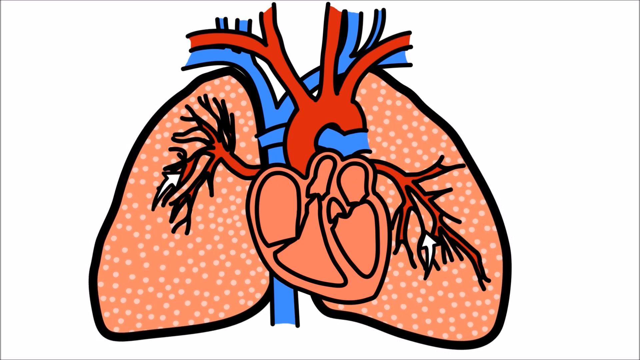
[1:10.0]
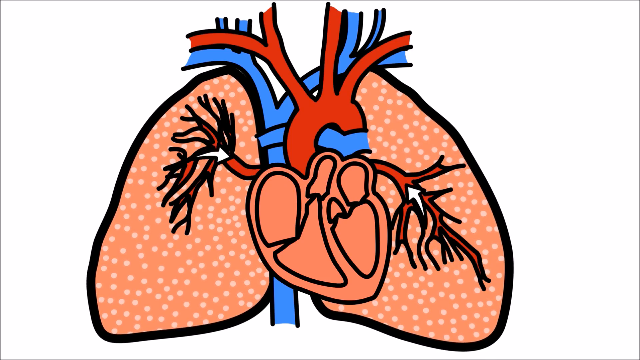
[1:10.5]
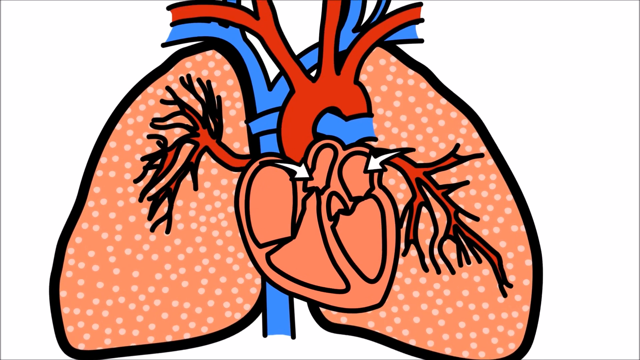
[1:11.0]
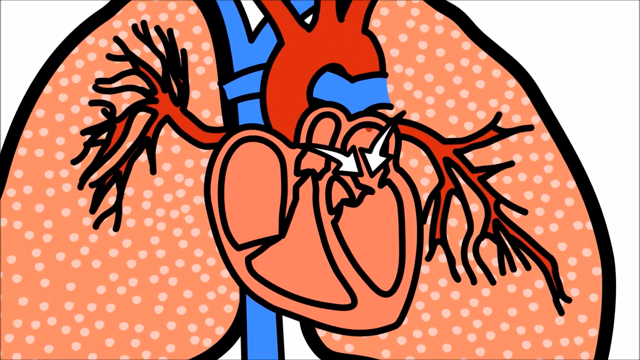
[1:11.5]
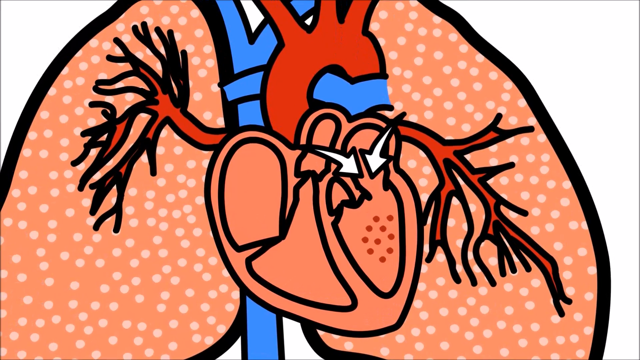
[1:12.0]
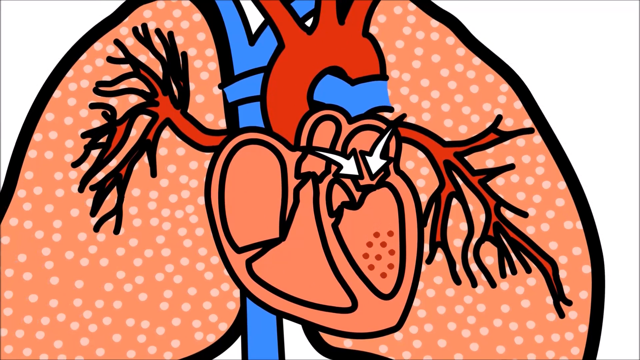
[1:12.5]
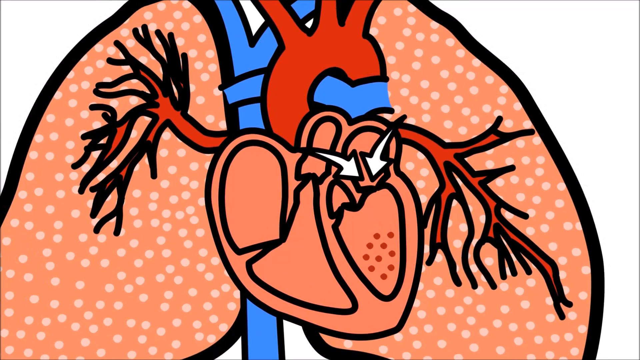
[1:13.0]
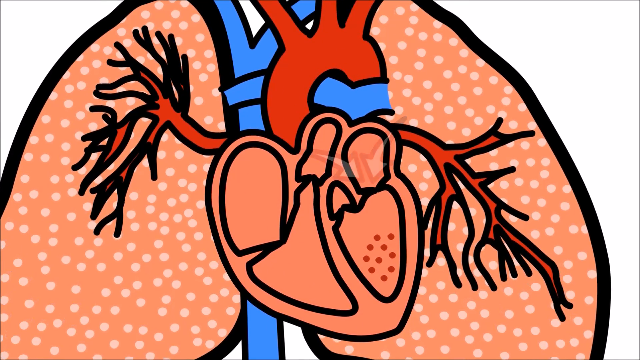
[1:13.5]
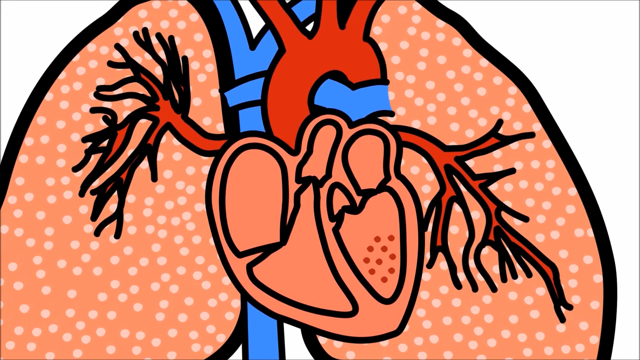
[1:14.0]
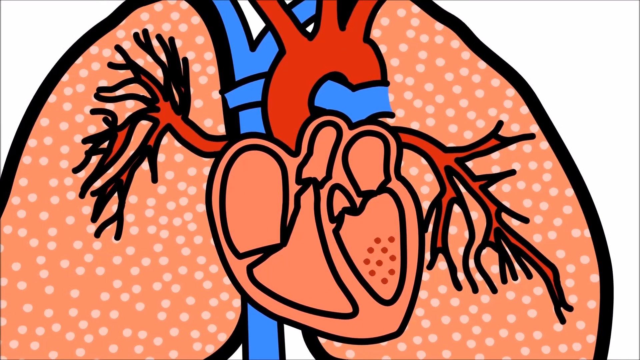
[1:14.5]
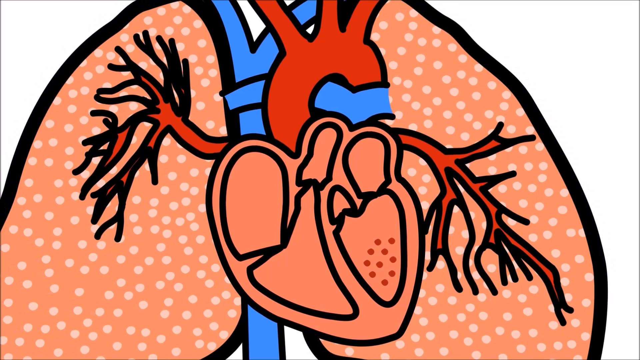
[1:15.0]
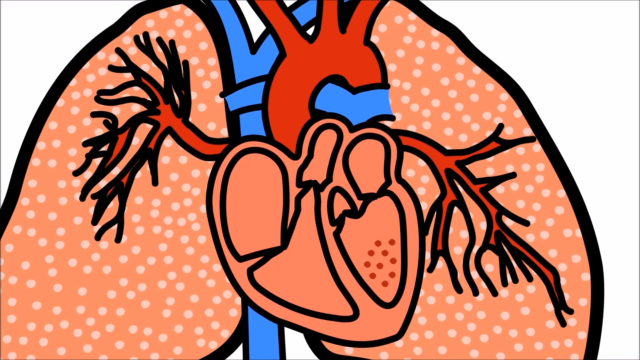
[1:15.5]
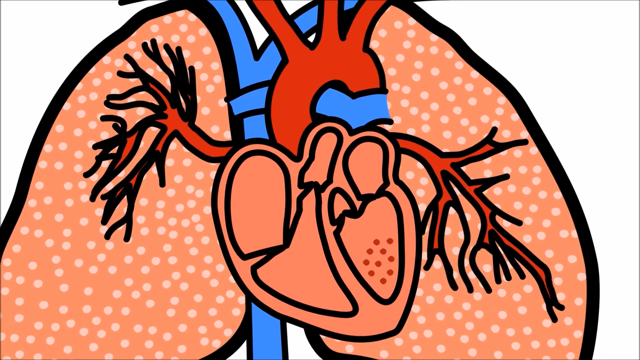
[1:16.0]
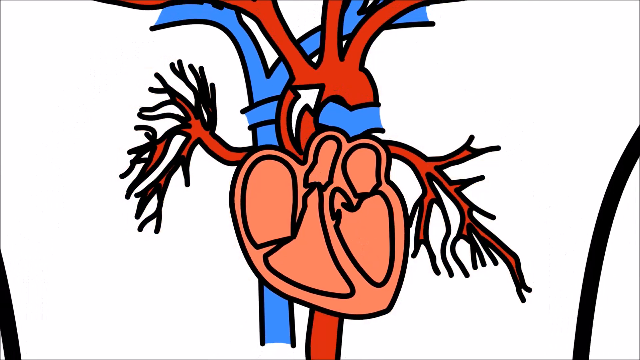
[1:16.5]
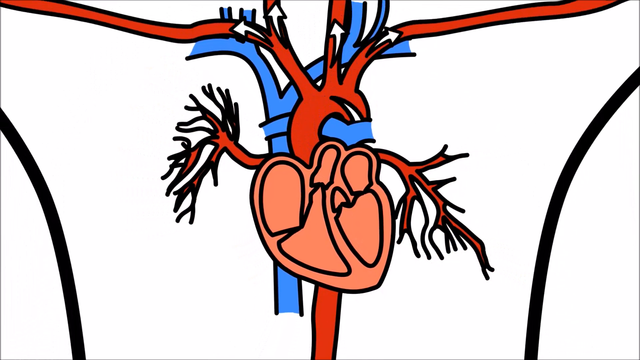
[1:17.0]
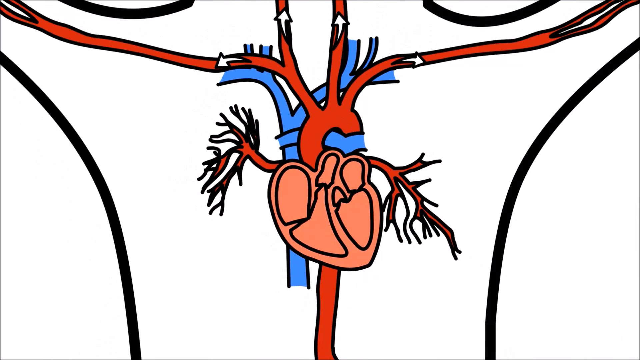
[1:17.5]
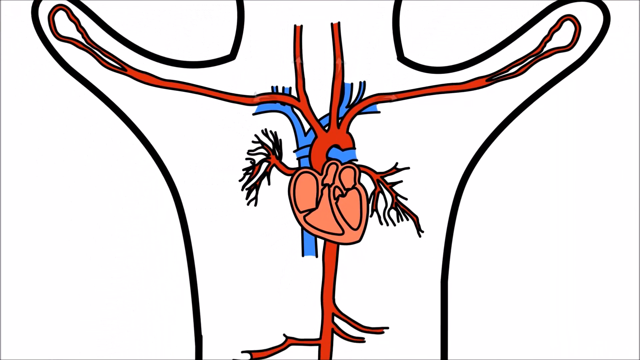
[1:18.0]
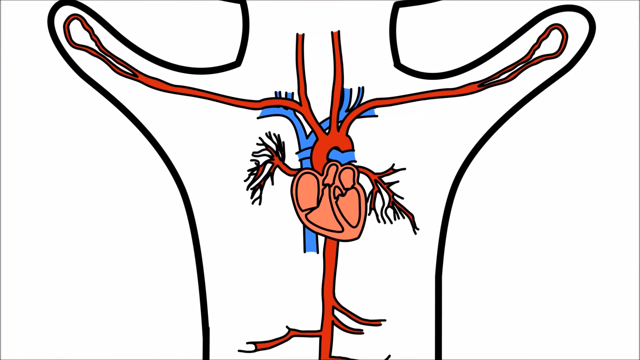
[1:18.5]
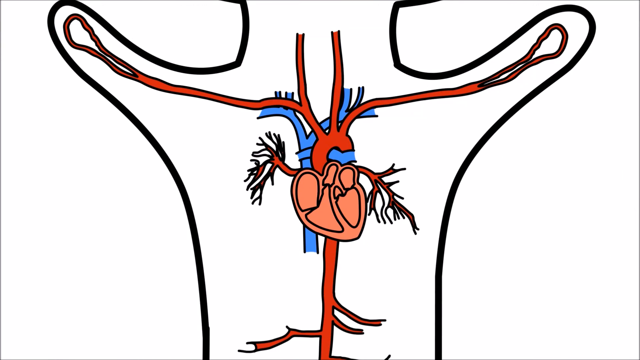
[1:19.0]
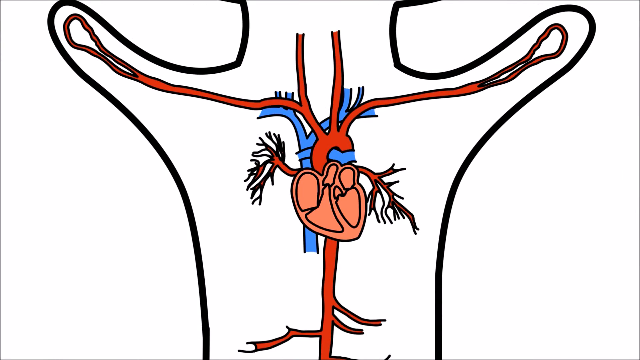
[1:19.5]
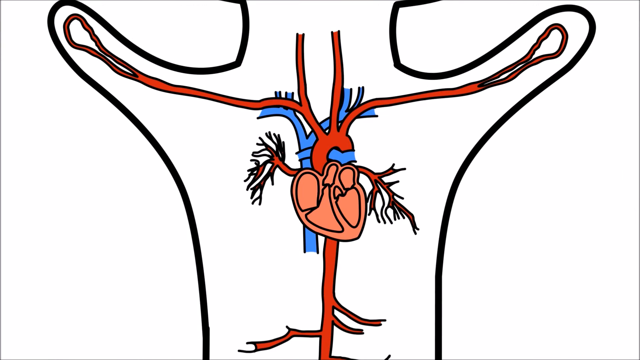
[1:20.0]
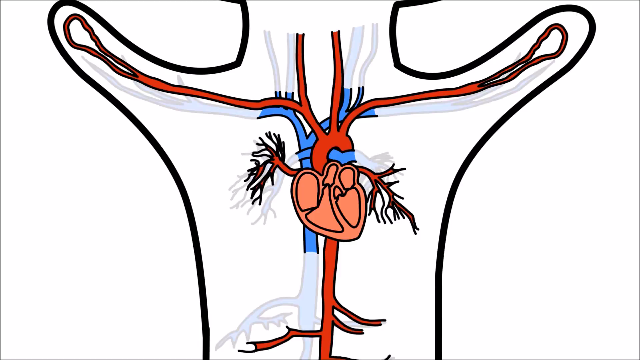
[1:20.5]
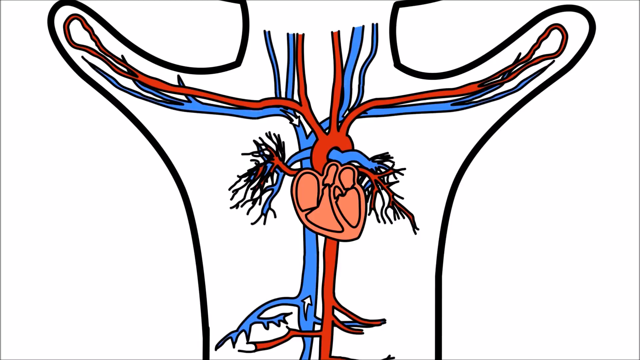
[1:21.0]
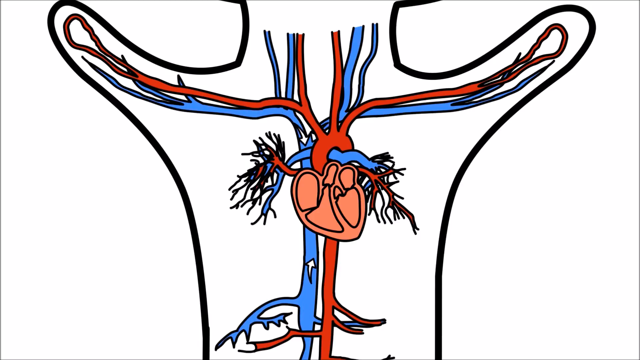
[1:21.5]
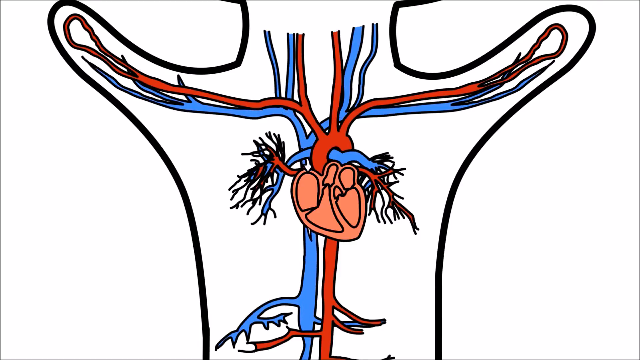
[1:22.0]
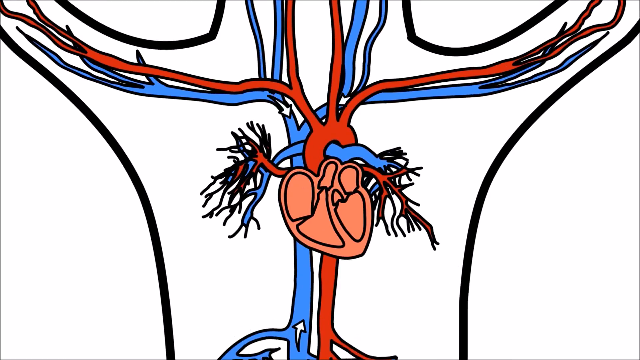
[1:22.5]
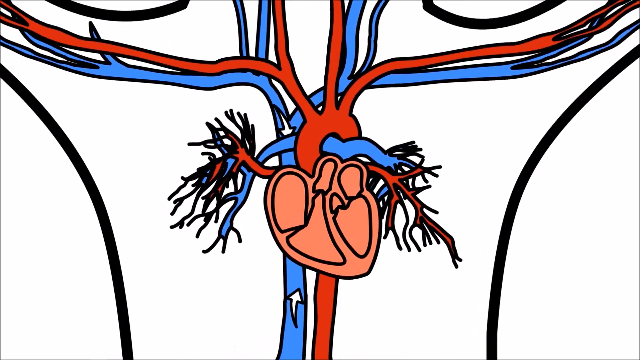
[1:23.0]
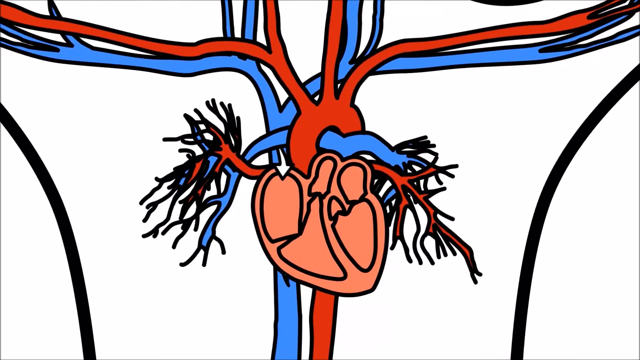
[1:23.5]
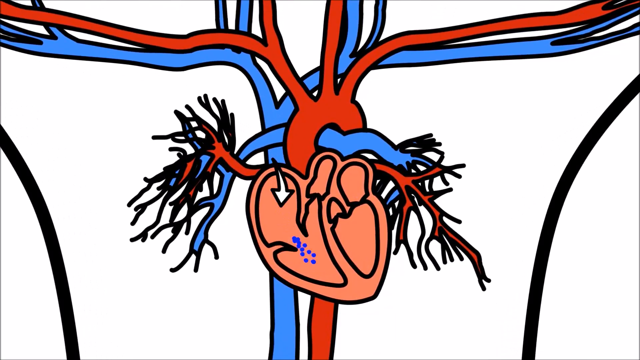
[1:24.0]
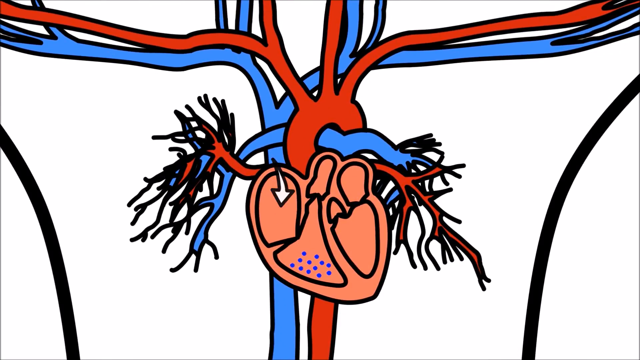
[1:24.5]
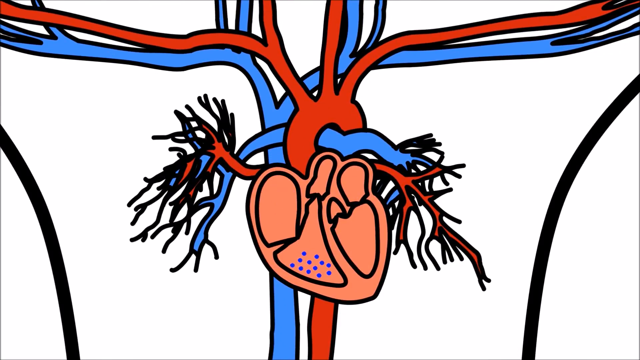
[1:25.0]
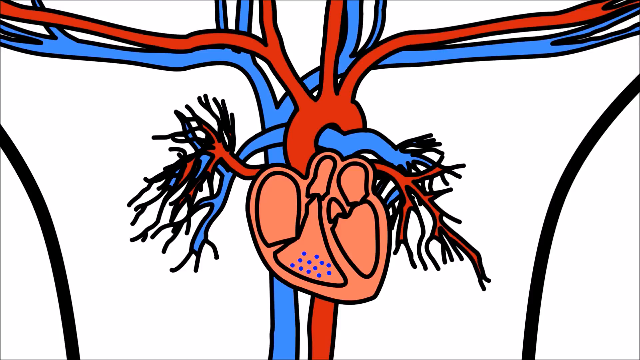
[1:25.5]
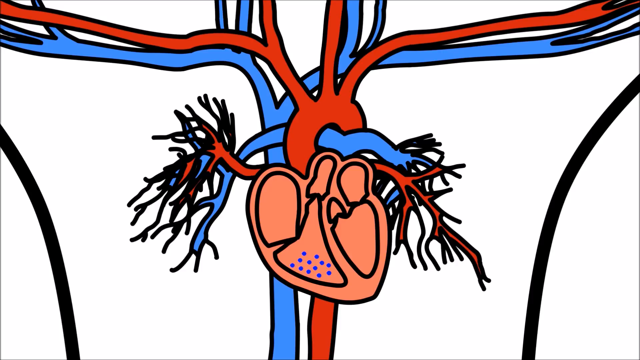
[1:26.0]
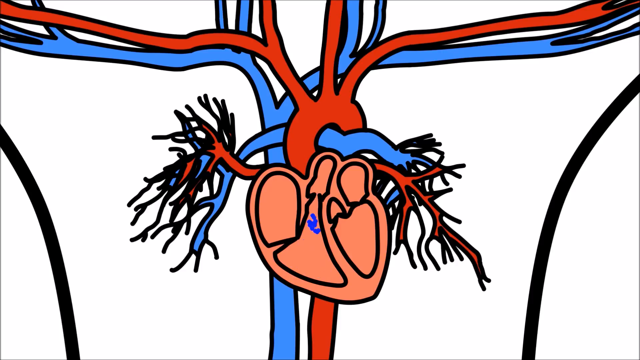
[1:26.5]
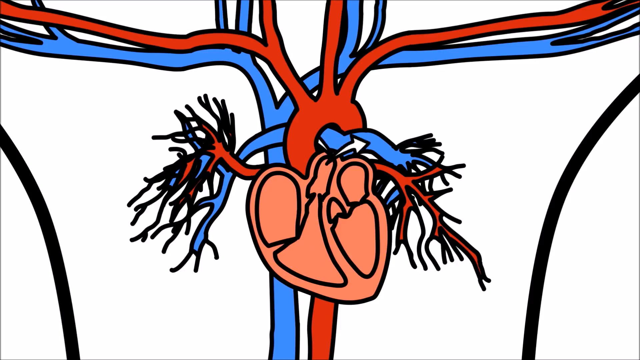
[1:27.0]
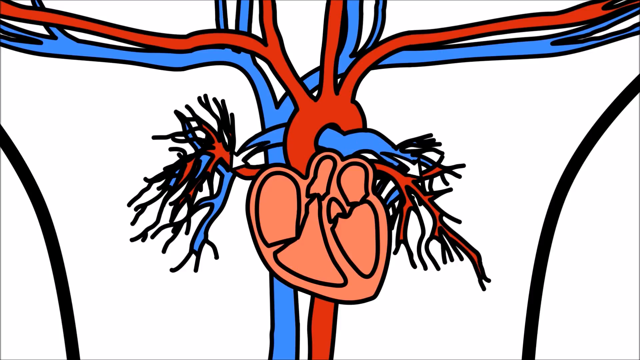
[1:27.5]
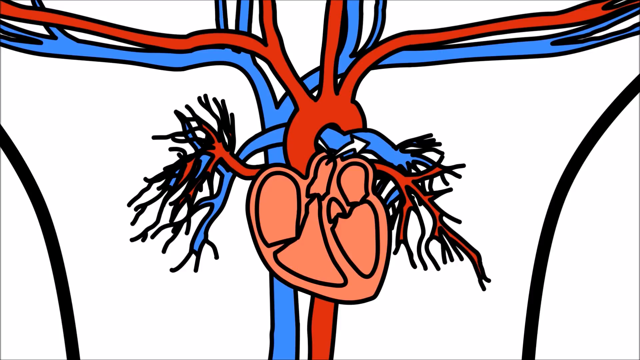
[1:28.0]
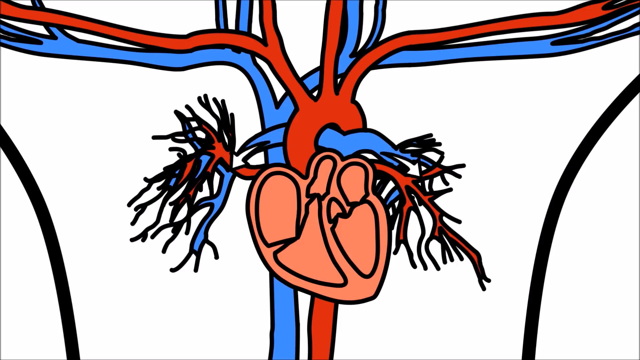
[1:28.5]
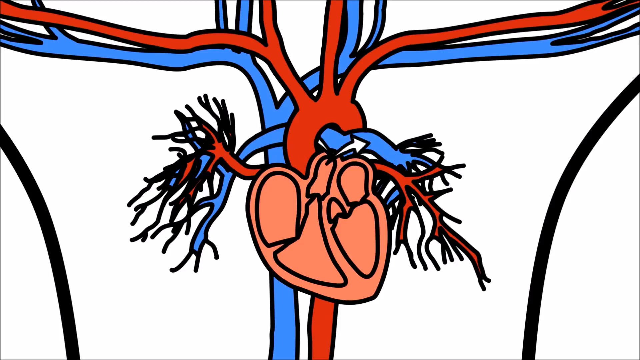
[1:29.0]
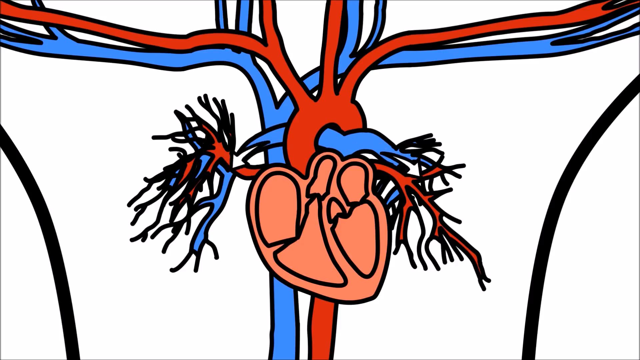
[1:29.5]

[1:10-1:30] A cartoon image shows the heart and the lungs, with vessels going to the lungs. The lungs inflate, and there are dots everywhere. Two arrows point to the heart, with red dots going into the heart, and as the lungs expand and contract the dots are dispersed out through the rest of the vessels, to the arms, the neck and down to the legs. A flow of red veins goes into the other side of the heart and drops blue dots, which are then dispersed through the blue veins of the rest of the body. It looks like one side of the heart controls the red veins or red tubes in the body and the other side kind of controls the blue veins or blue parts of the body.